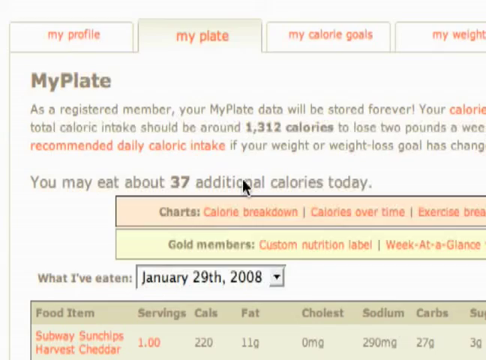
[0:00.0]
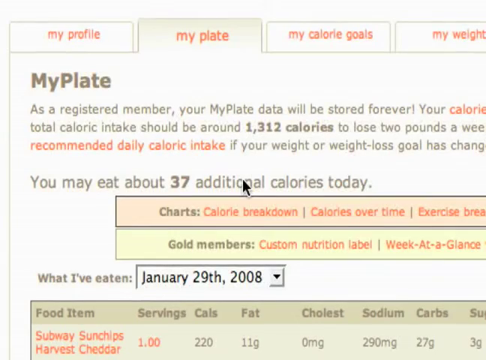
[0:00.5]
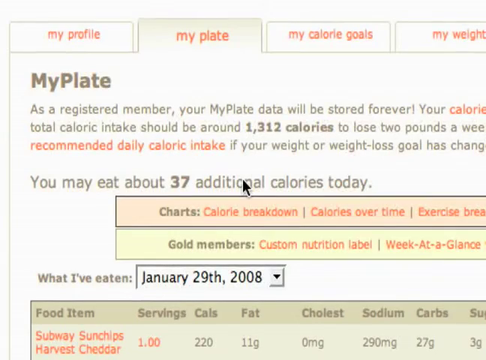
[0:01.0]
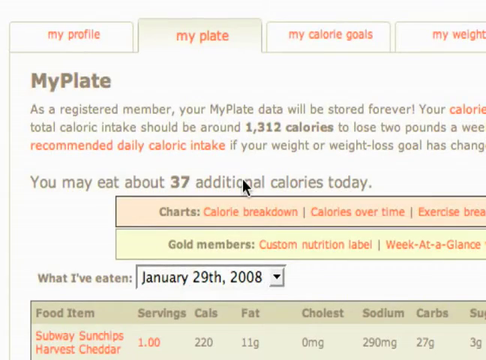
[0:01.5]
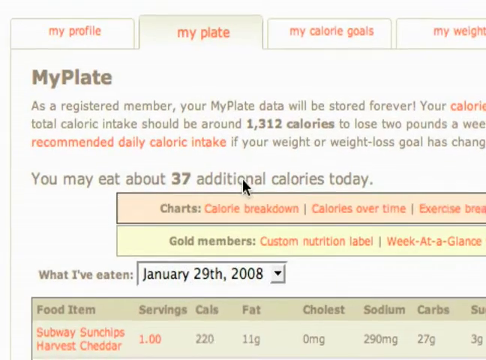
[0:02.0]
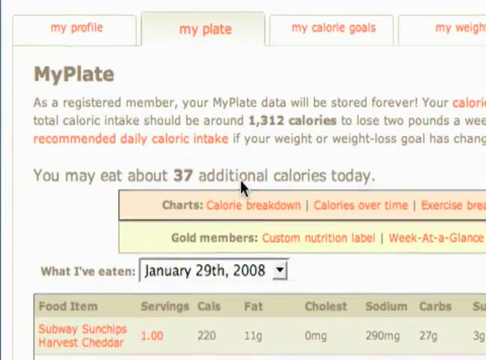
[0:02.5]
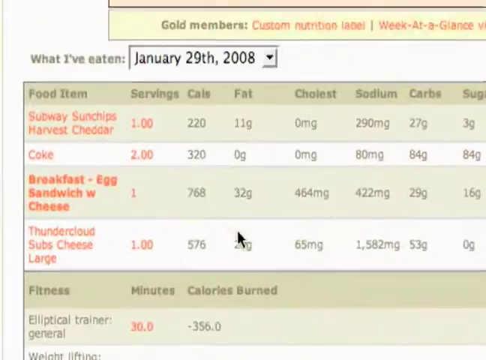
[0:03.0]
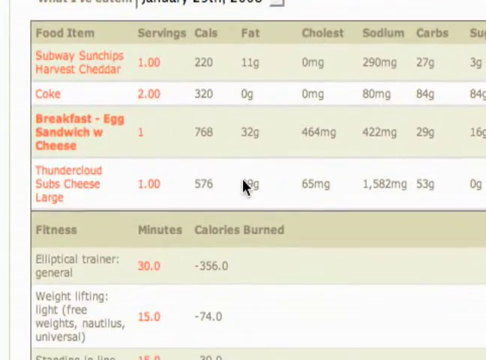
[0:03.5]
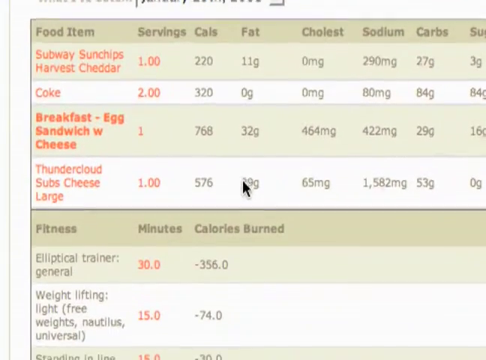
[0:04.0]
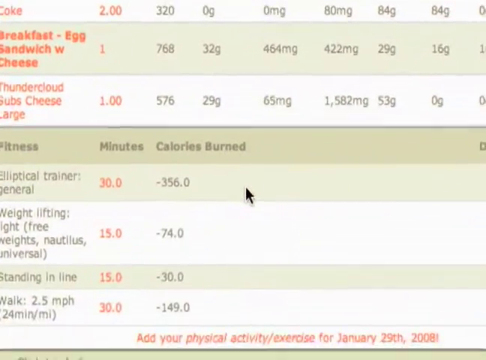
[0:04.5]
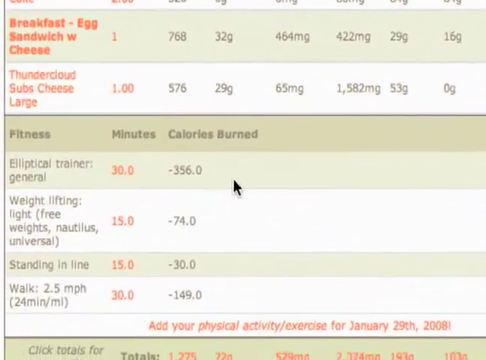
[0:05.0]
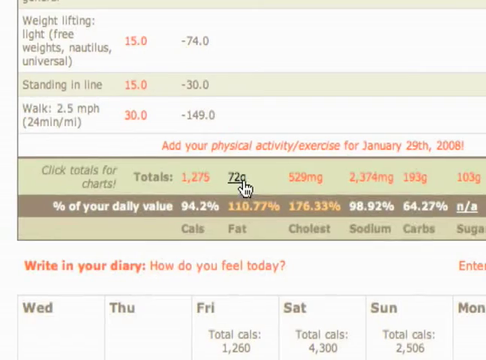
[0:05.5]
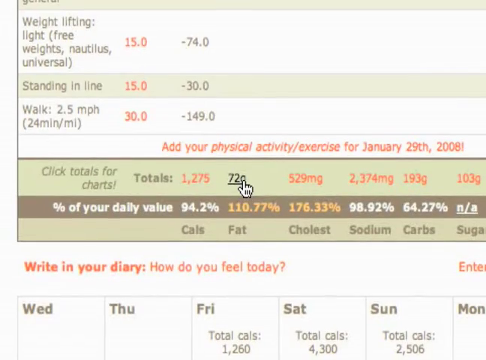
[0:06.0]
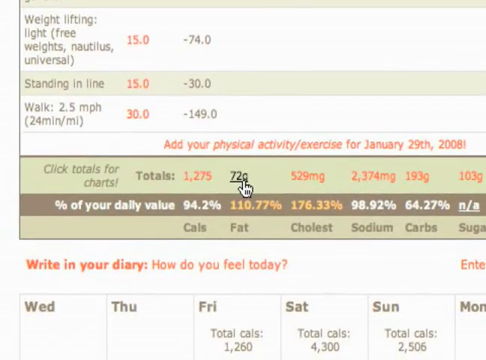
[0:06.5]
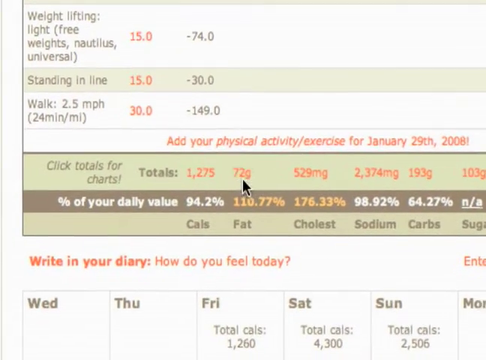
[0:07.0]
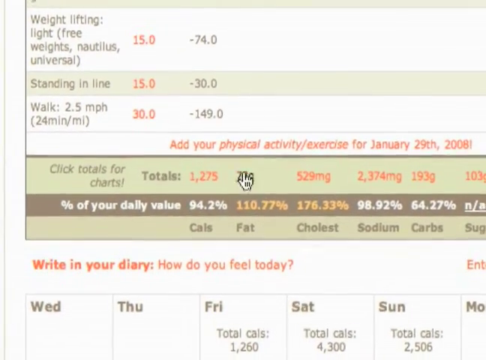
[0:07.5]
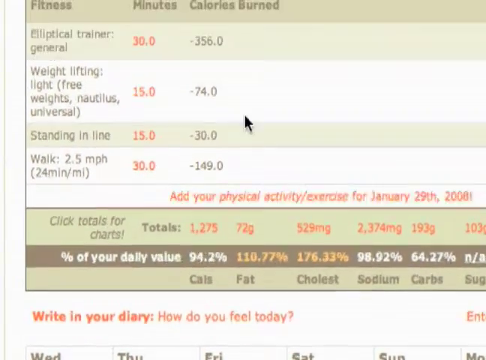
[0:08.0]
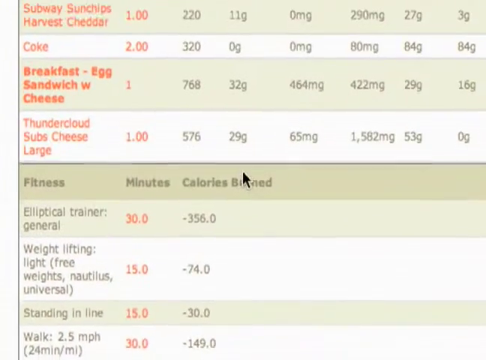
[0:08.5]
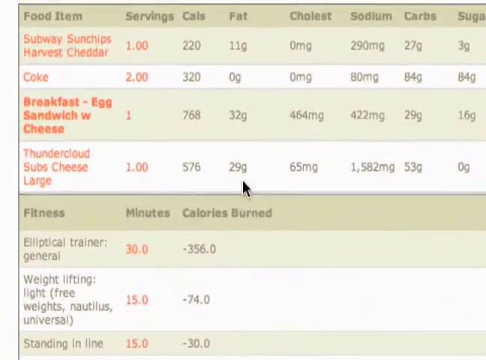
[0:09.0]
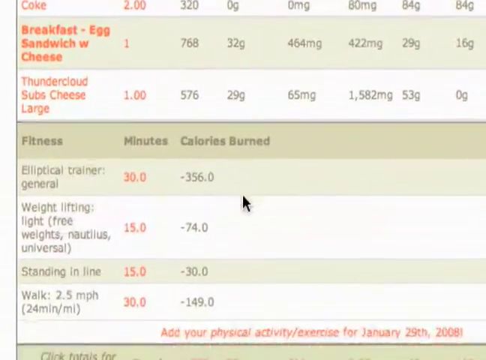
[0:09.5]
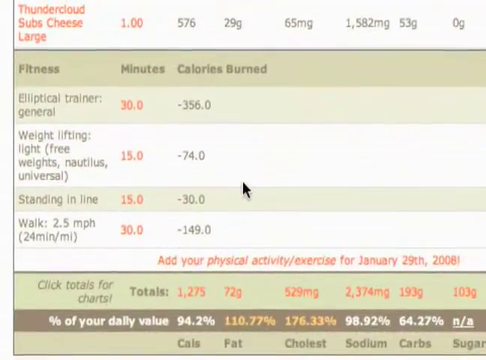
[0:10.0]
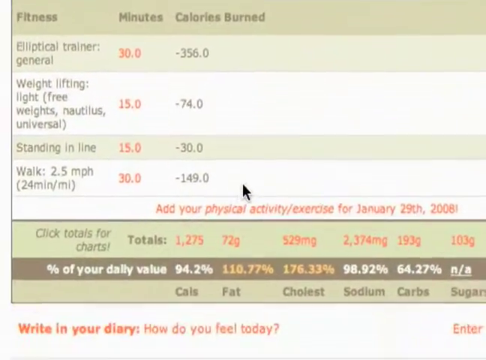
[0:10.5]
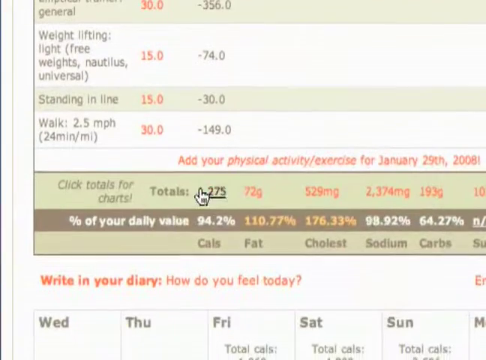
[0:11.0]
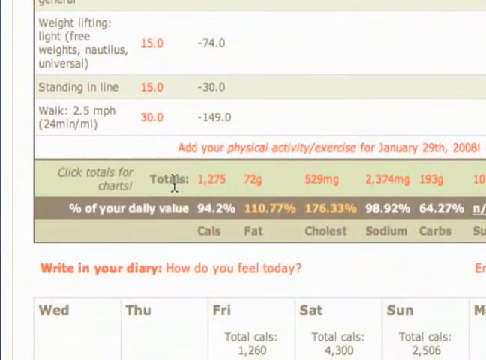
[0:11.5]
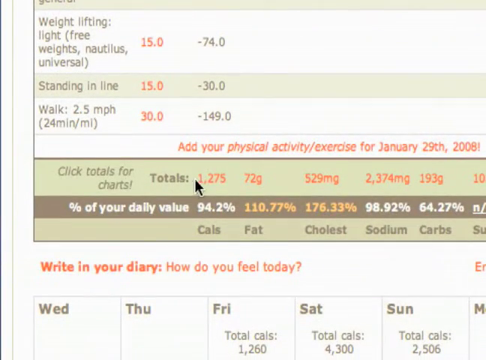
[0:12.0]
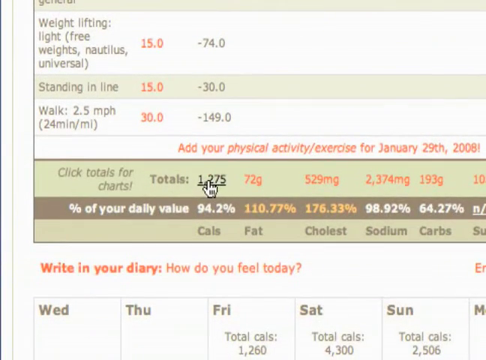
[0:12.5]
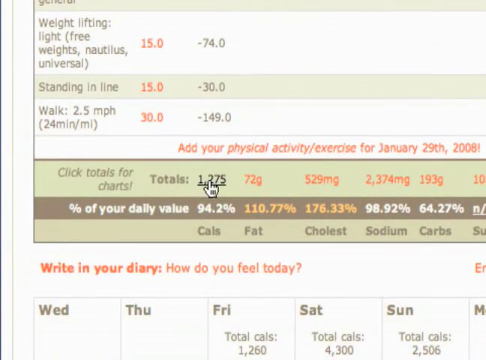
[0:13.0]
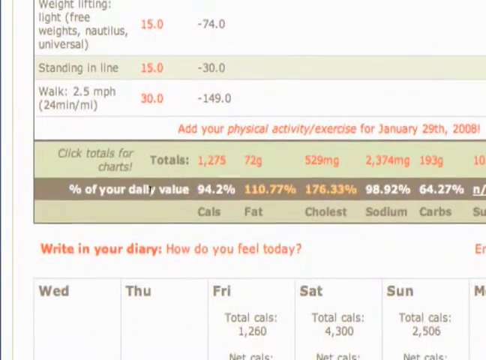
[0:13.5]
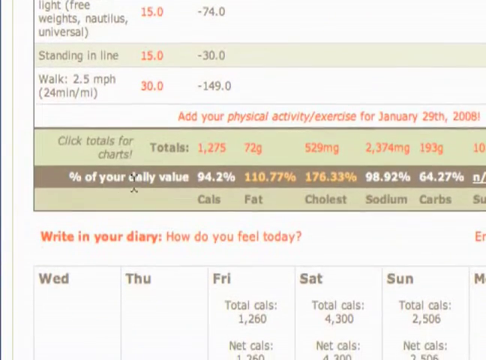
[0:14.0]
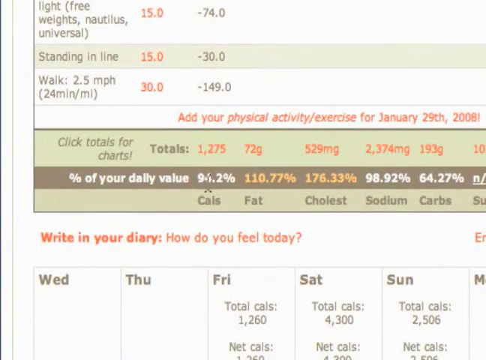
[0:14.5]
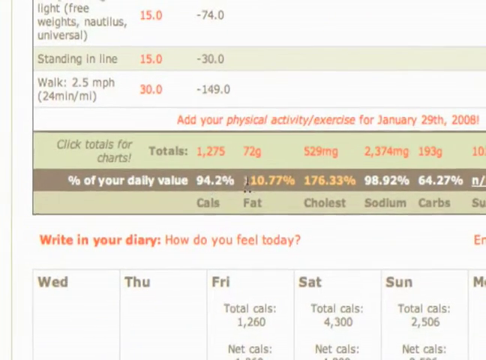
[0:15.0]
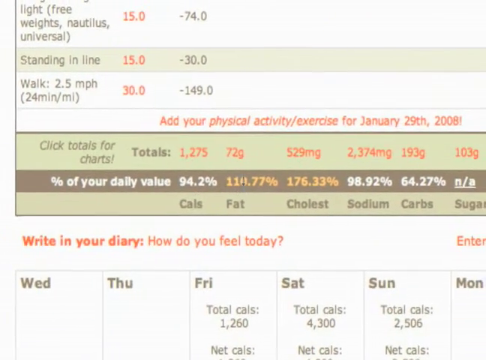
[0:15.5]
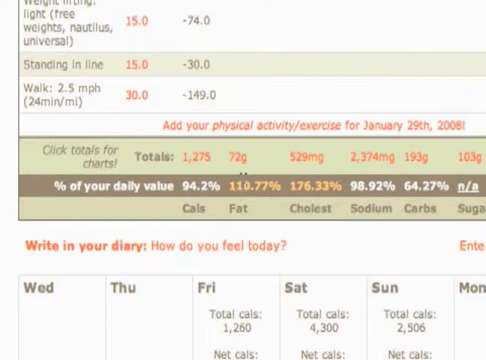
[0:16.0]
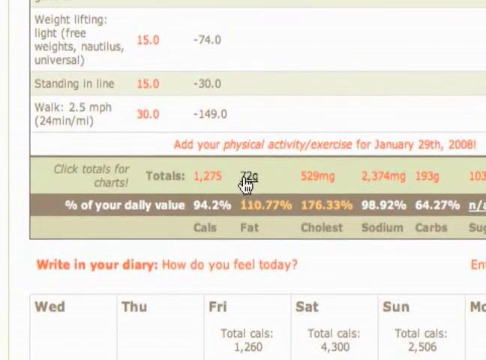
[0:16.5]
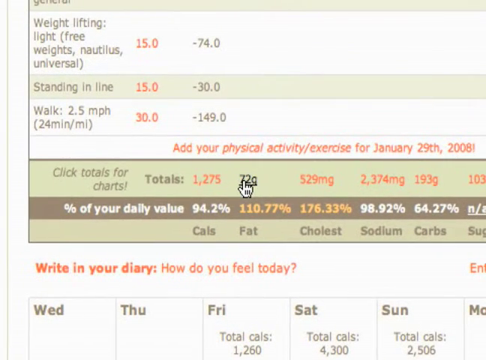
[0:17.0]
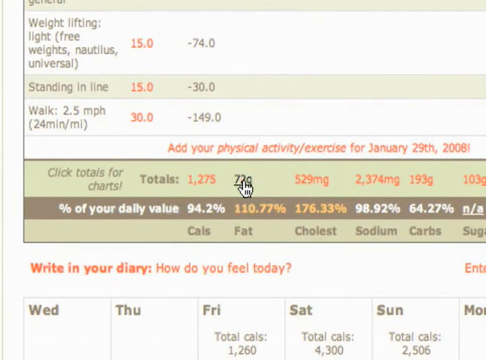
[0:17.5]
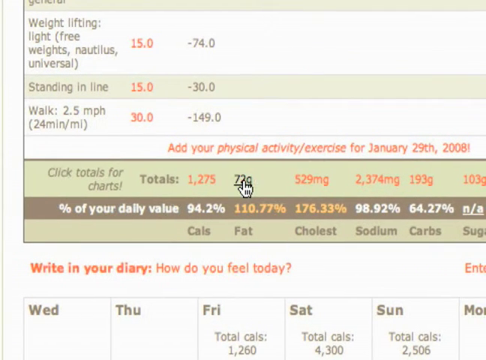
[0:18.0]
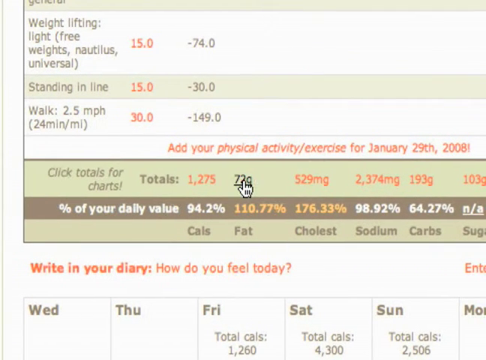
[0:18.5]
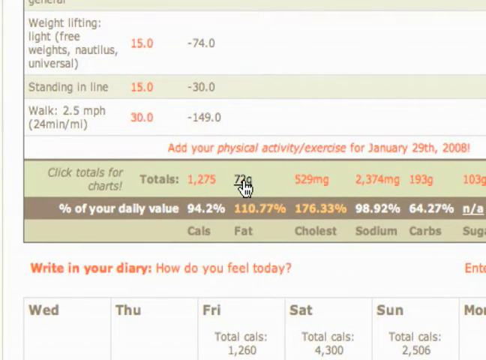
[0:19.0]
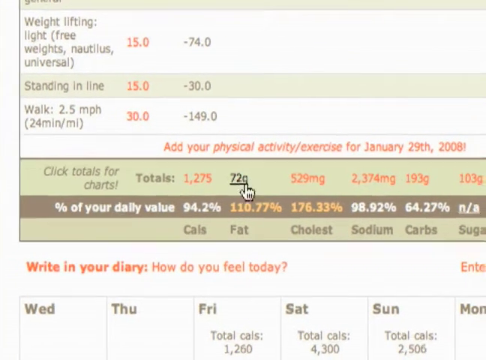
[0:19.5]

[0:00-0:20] Someone selects a screen in an application with four visible tabs; the selected tab is called My Plate. The screen mentions "as a registered member, your My Plate data will be stored forever" and shows calorie information. The mouse is positioned underneath the word "additional" in the sentence "you made about 37 additional calories today." The user very quickly scrolls down the screen with the mouse. Visible is what has been eaten on January 29th, 2008, in a pull-down menu. The mouse is briefly in the center of the screen and keeps moving very quickly, only briefly sort of pausing at a few sections. The user then seems to hover over an attribute reading 72 grams, which seems to be a link; to the left of it is "click details for charts." It appears to be clickable, since a small underline appears on hover and the pointer changes to a little hand. The user slowly moves the mouse back up, then down again, and hovers over another attribute, 1275, where the hand icon appears again. The user then selects a line that says "percentage of your daily value, 94.2%."